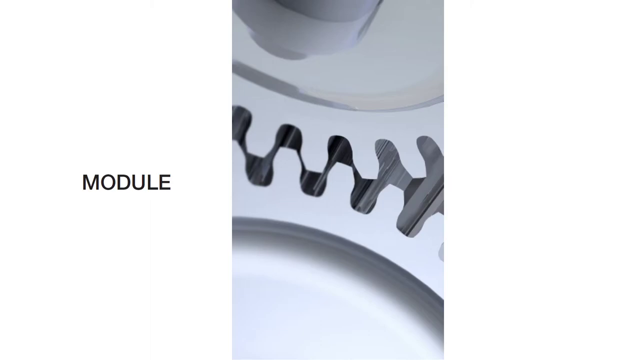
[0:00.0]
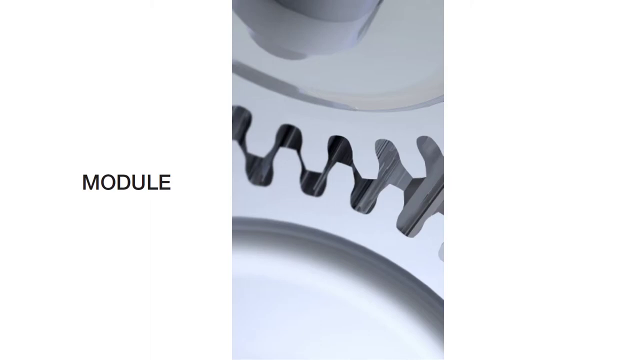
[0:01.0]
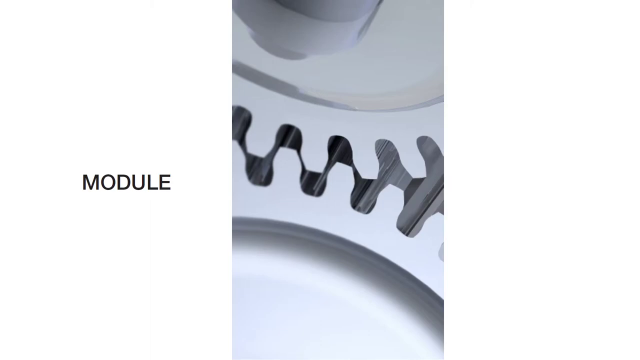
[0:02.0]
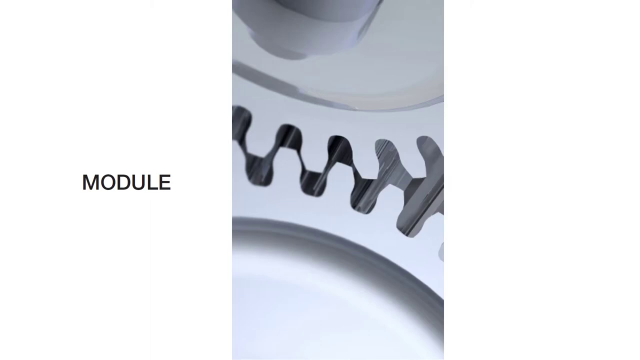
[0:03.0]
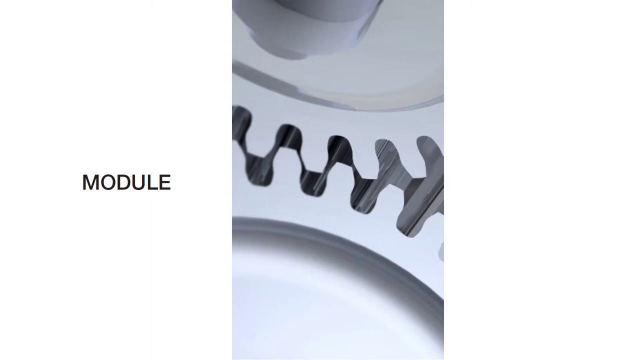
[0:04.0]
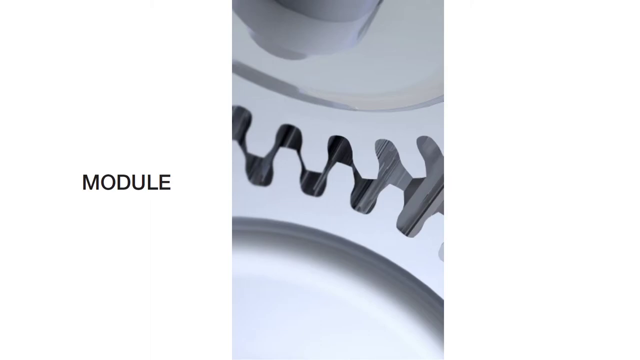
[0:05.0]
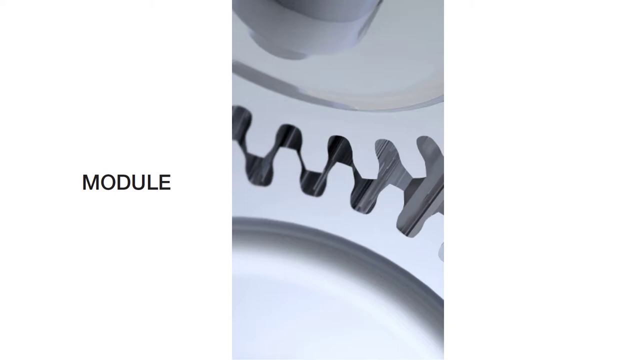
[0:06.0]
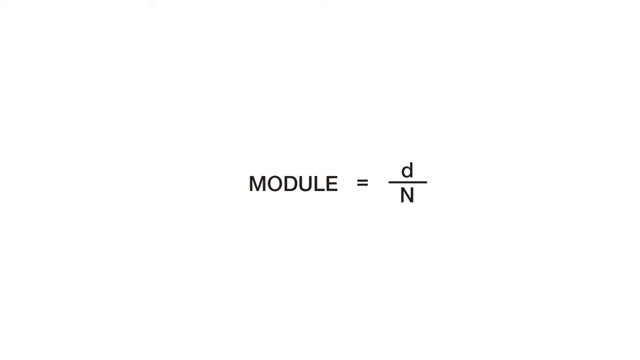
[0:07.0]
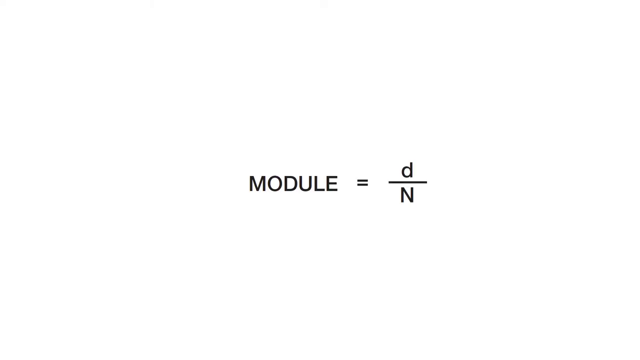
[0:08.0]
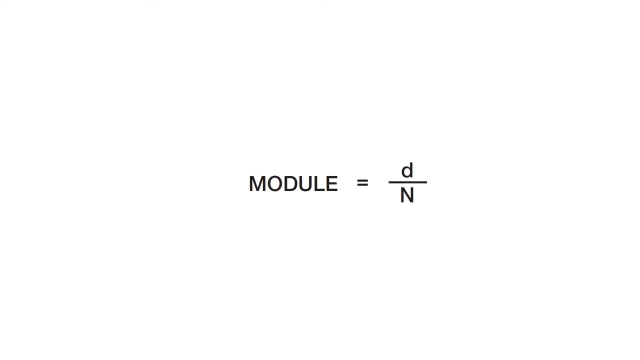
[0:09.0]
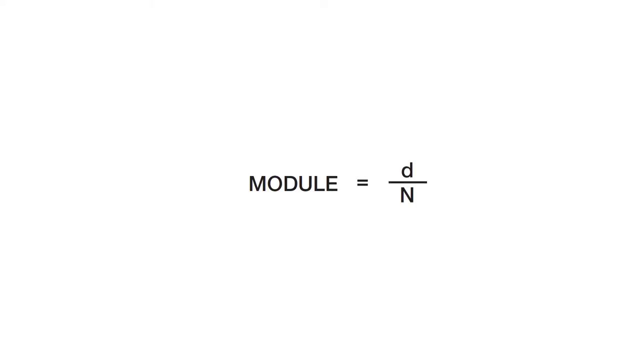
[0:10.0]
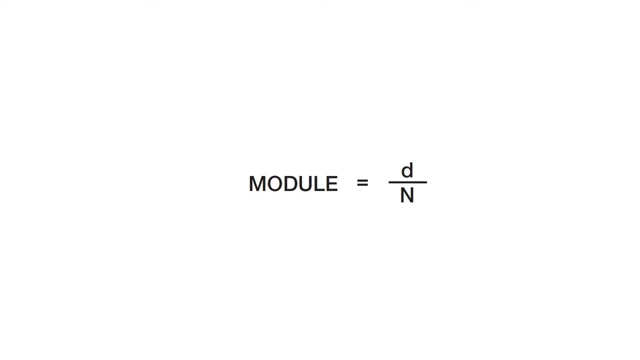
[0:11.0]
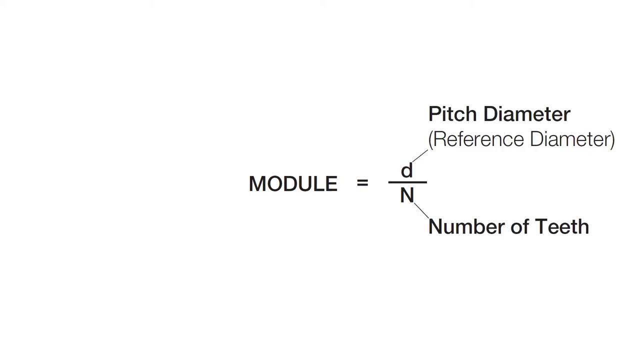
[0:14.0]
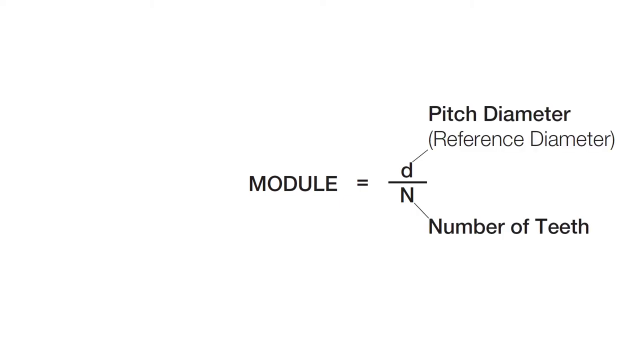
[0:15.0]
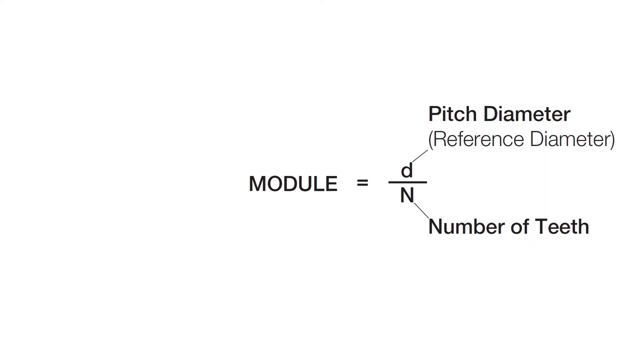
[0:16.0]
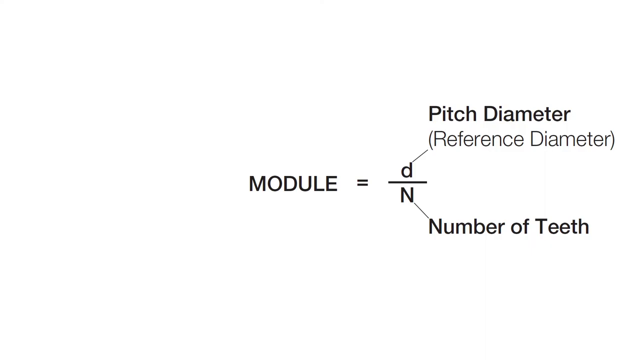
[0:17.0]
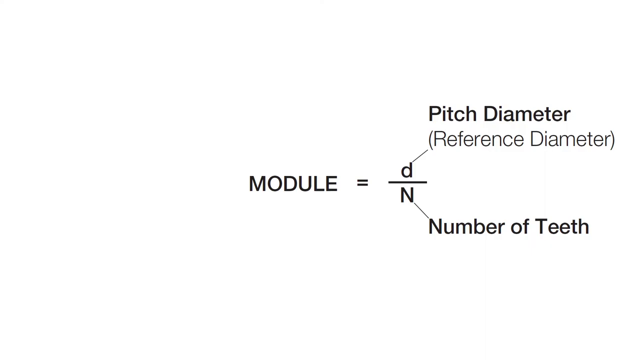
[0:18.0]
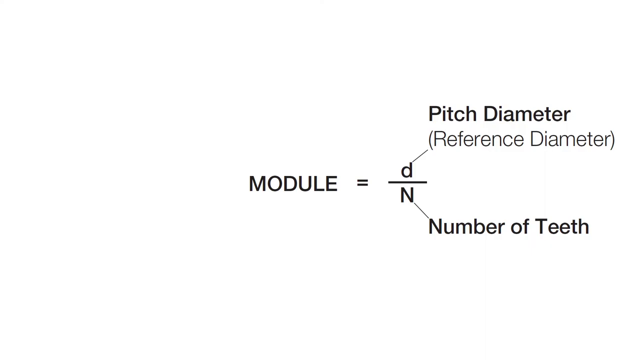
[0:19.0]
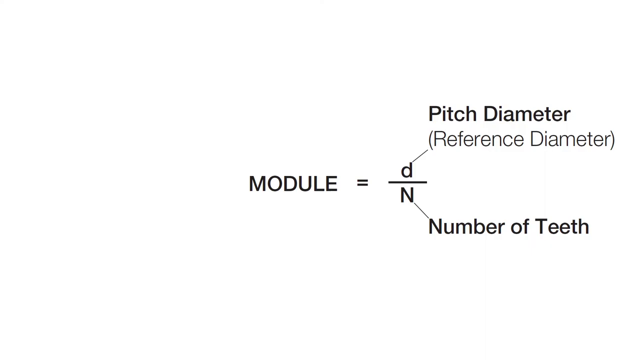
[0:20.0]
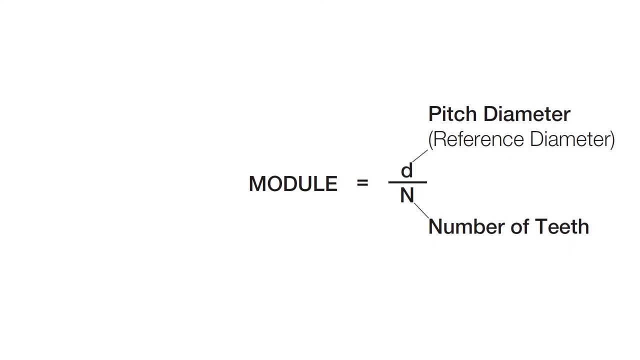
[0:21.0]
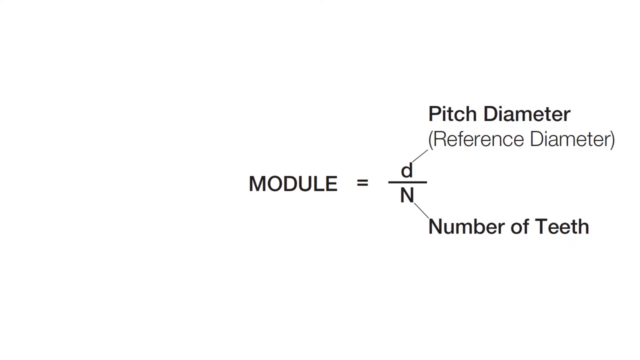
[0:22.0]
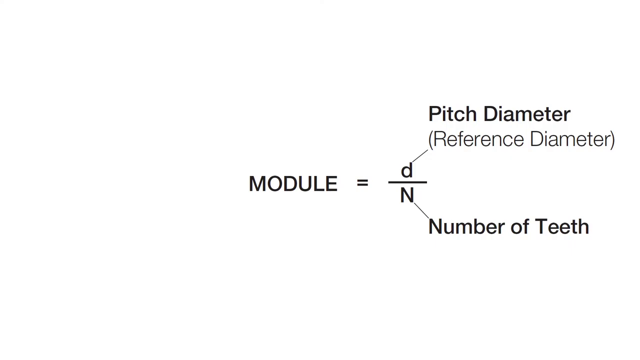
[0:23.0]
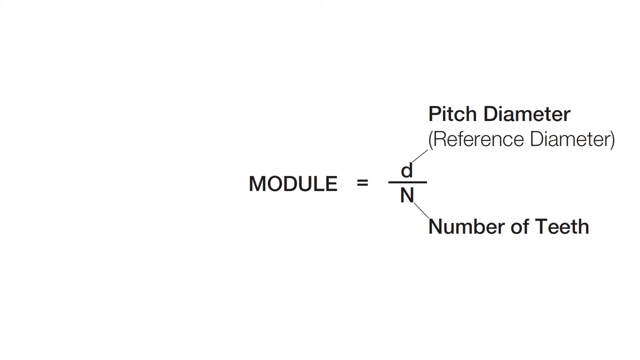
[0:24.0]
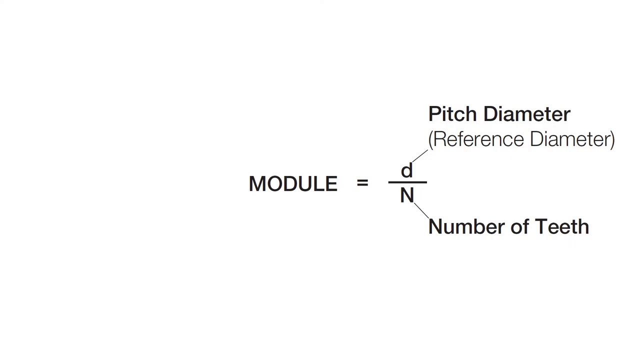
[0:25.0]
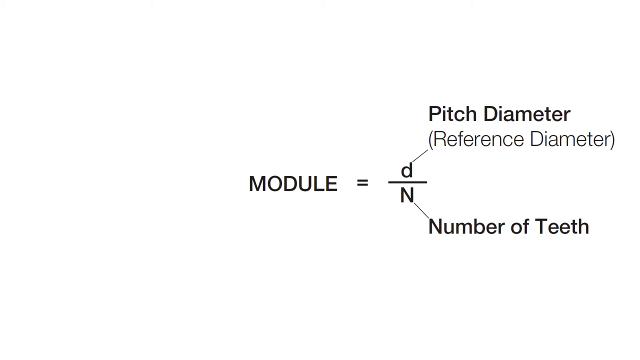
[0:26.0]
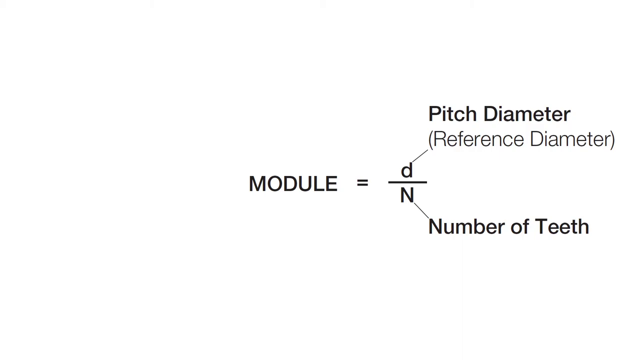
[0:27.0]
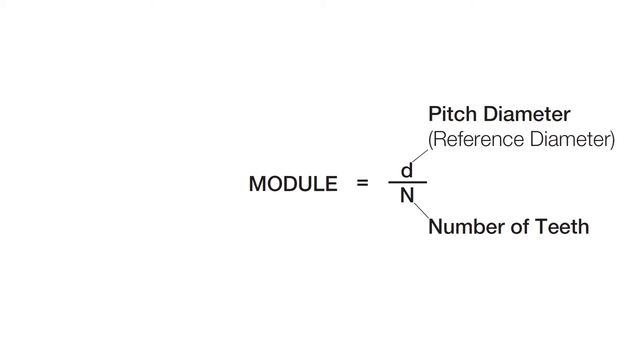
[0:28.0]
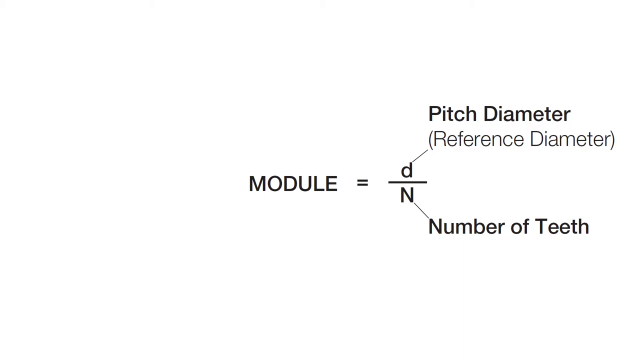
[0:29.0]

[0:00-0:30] A largely white screen shows two metal gears in the middle, taking up about 30% of the screen, with their teeth grinding against each other or going into each other. On the left side, small black text reads "module", while the opposite side of the screen is completely white; the gears and the text are the only things on screen. The video quickly cuts to a mostly white screen where the same black text, now in the middle, reads "module" followed by an equals sign, with the letter d on the top of the equation and a capital N at the bottom: module equals d divided by N. More black text quickly appears: an arrow points from the lowercase d to black text that reads "pitch diameter =" followed by a parenthesis and "reference diameter", and at the bottom a different arrow points from the capital N to black text reading "number of teeth". Most of the screen remains white with no images or other text, and the shot ends with these elements still present and no changes in the background.